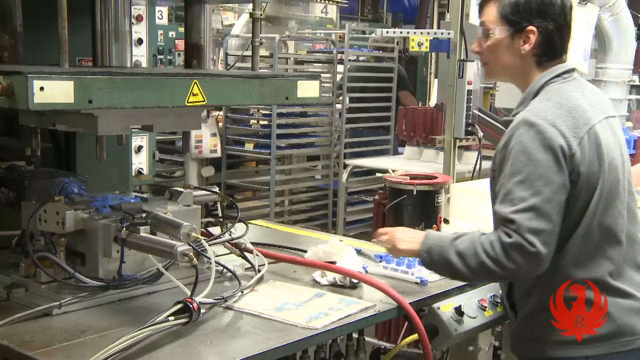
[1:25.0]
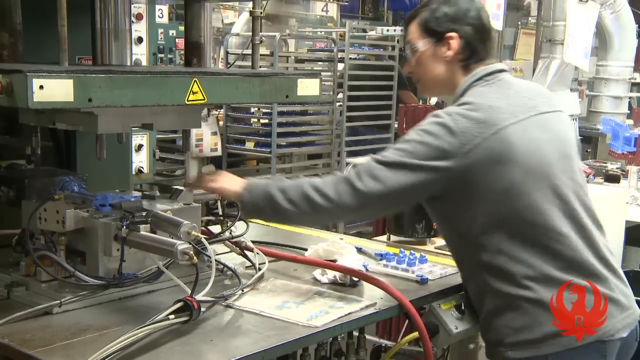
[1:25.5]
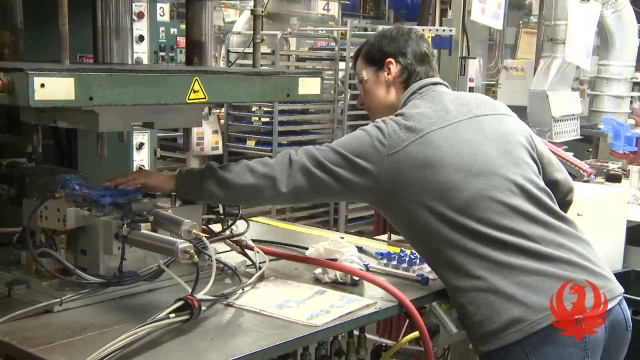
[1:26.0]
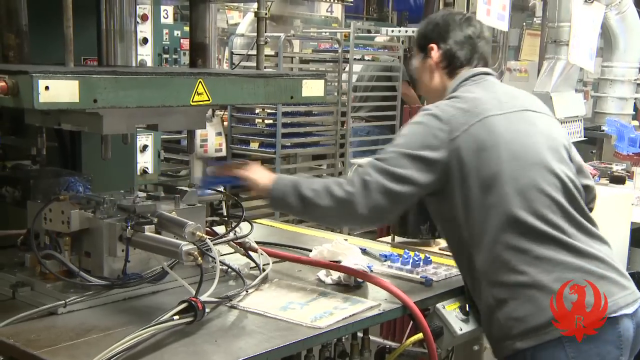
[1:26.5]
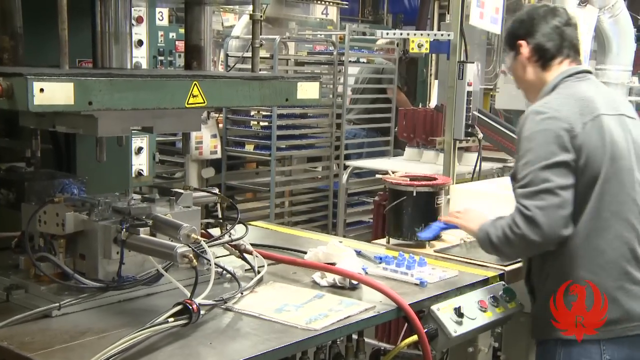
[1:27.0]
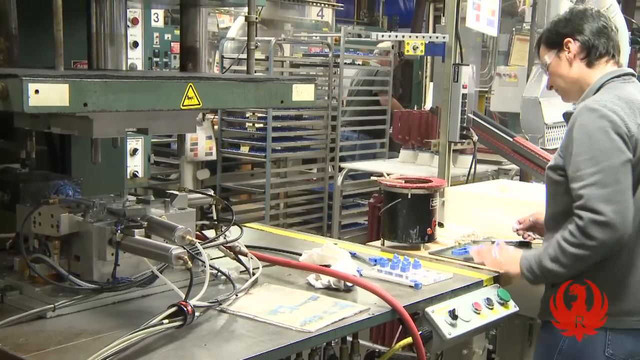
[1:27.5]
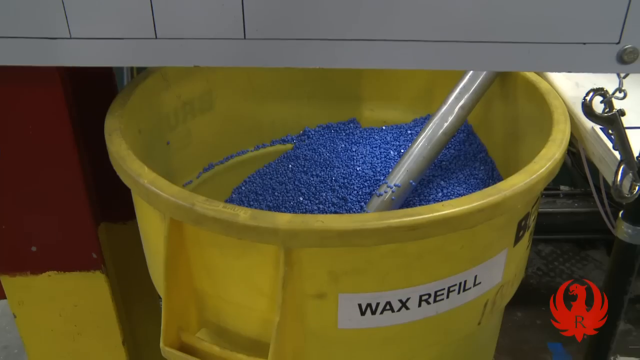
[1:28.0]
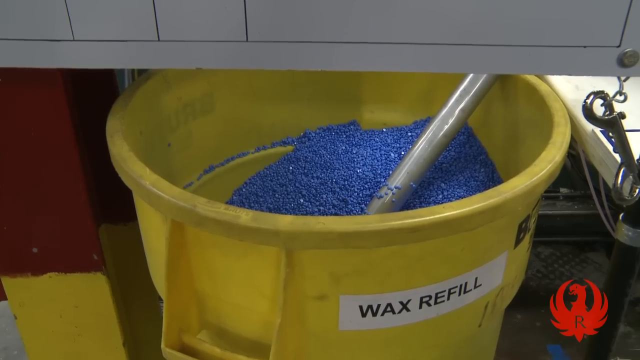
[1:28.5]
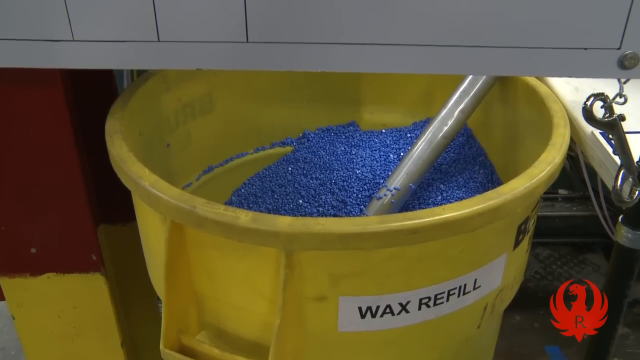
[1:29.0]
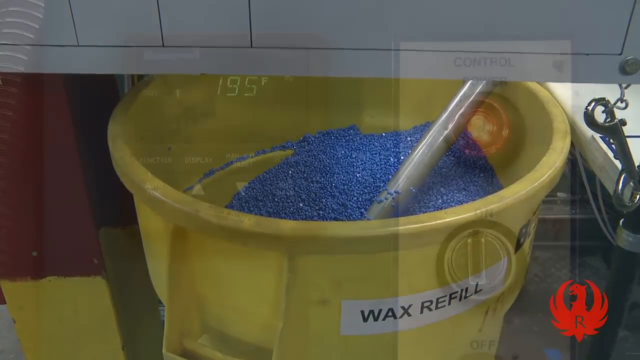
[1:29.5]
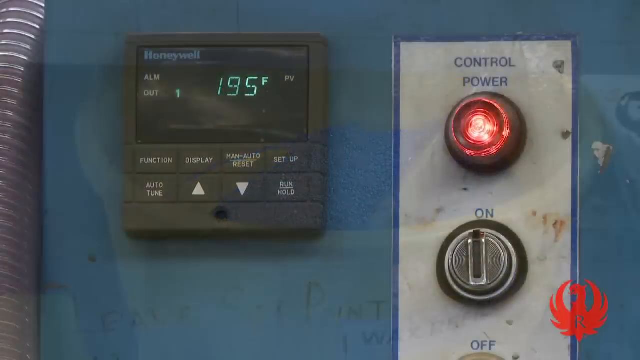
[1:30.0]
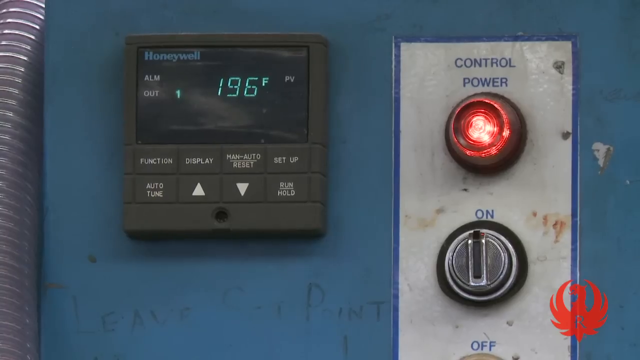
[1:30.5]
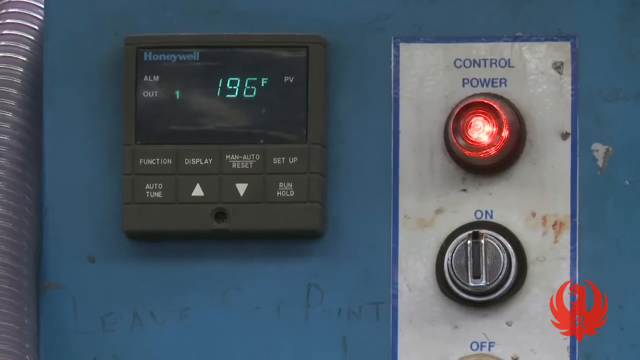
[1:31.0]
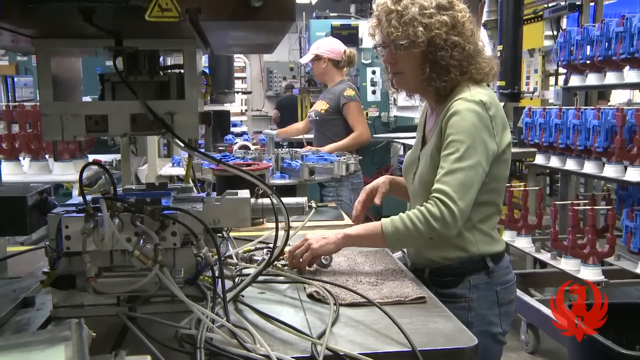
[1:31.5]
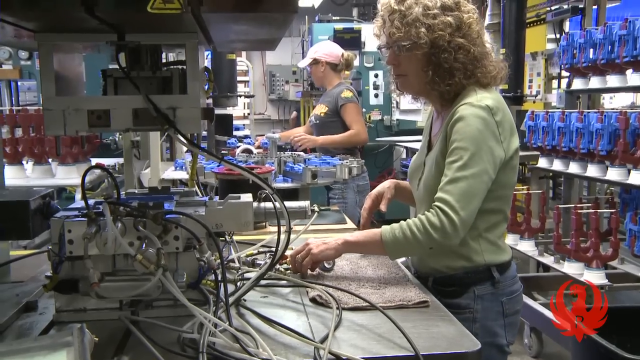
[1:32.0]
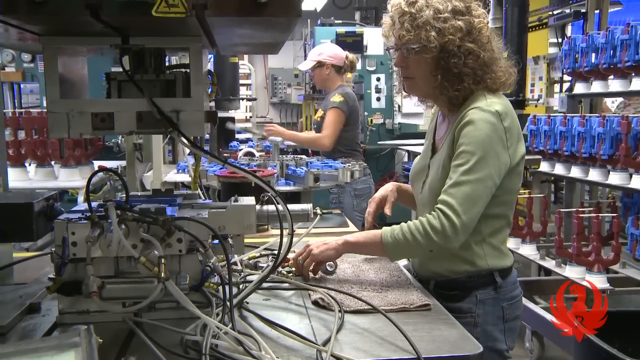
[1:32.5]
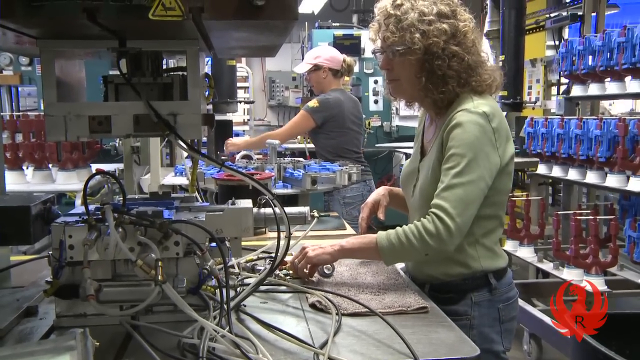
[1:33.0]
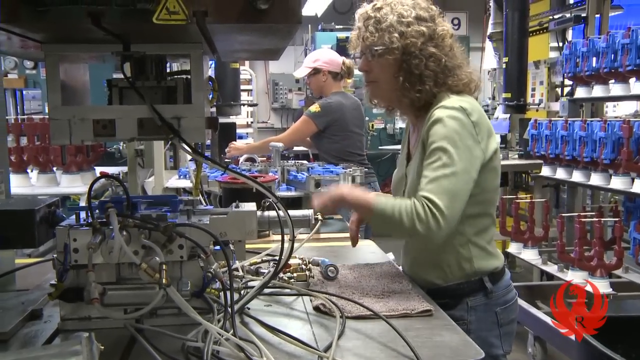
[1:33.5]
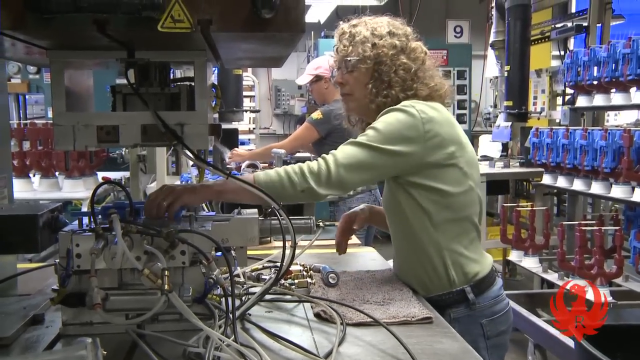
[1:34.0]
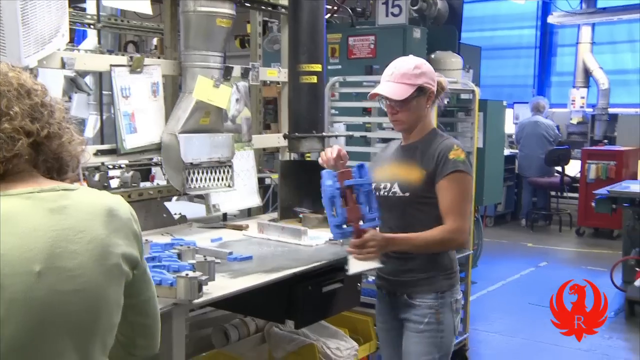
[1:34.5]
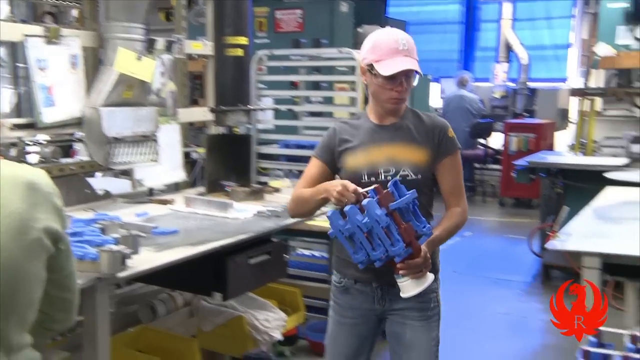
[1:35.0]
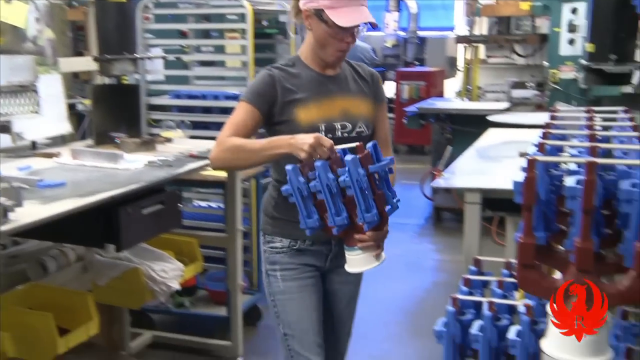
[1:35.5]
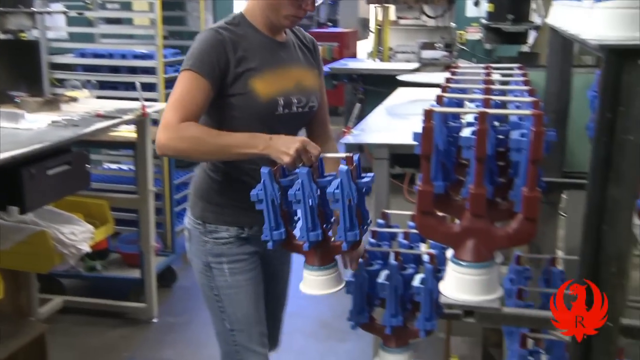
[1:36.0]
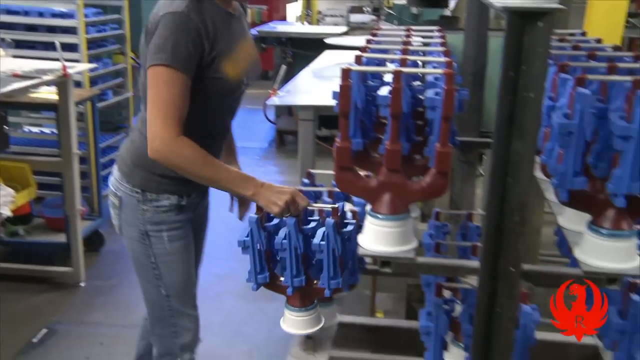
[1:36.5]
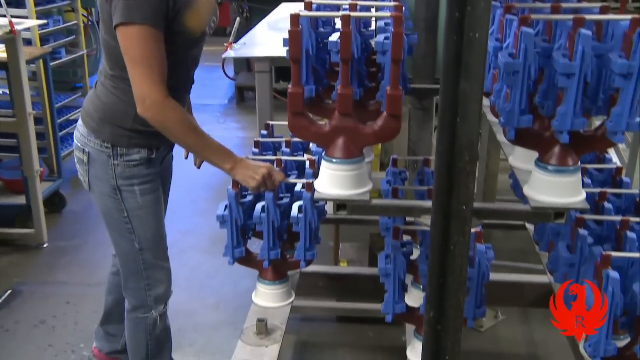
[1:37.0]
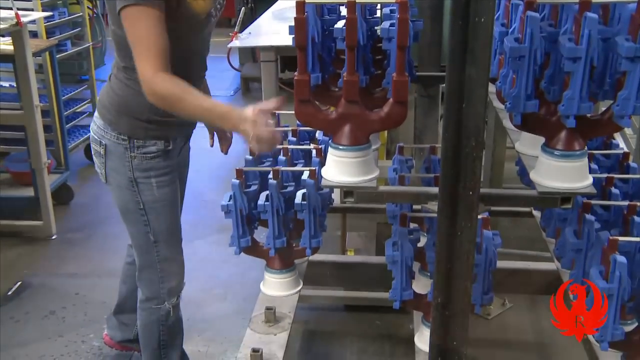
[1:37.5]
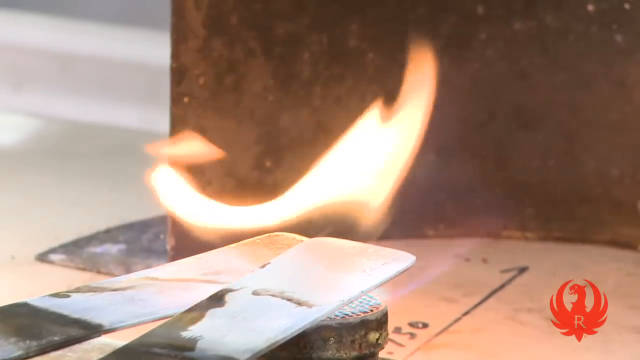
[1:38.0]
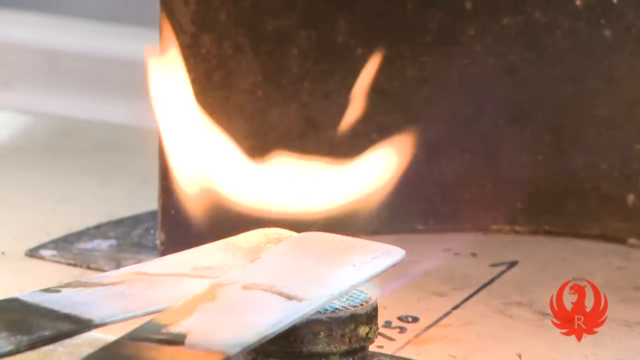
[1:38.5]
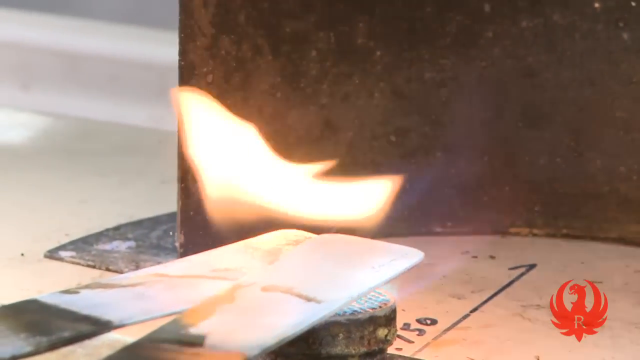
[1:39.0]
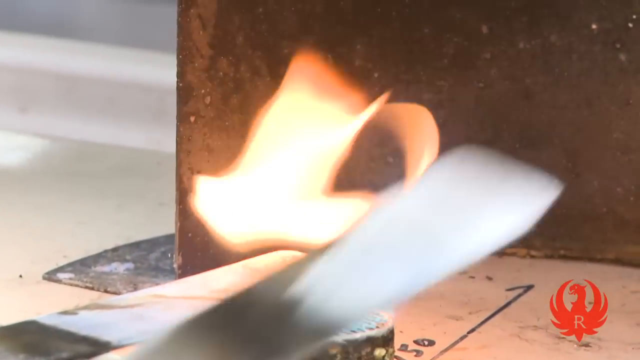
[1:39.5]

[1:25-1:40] In a factory there is blue wax in a bucket, apparently melted at 196 degrees, and workers are apparently making blue wax molds. Some wax is on fire. A man reaches up to get a blue wax mold and a bucket of wax refill, and women make wax molds. These people may be employees of Pine Tree Castings.